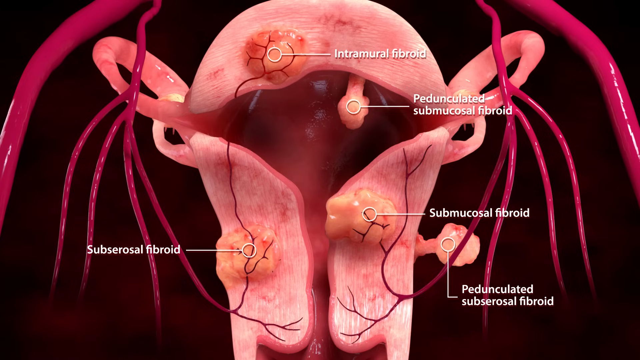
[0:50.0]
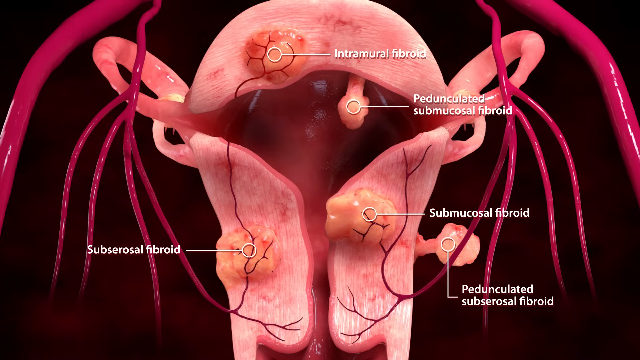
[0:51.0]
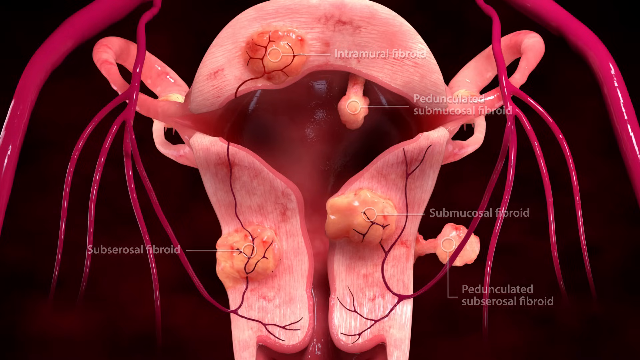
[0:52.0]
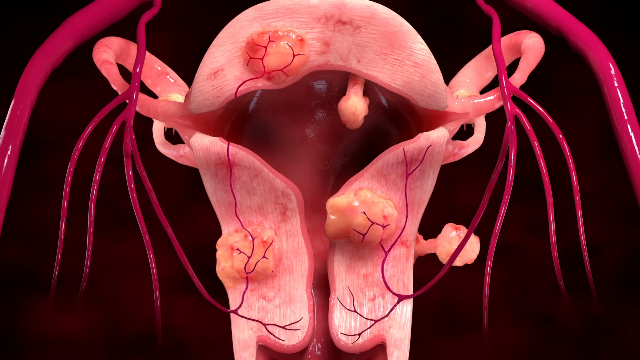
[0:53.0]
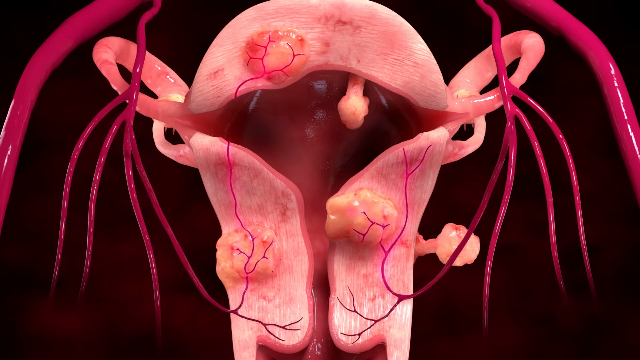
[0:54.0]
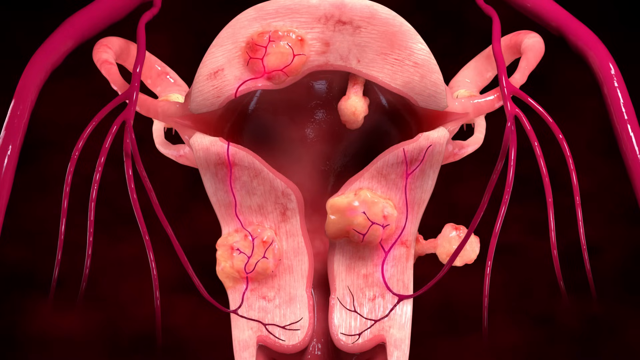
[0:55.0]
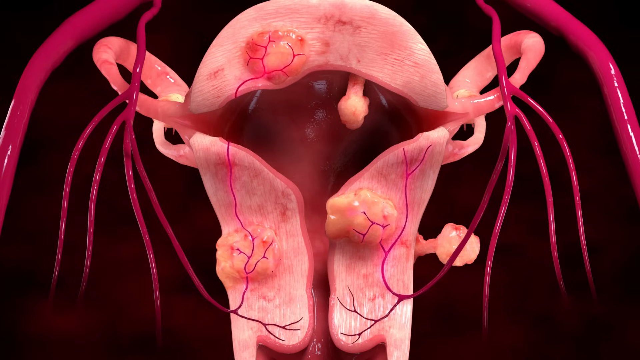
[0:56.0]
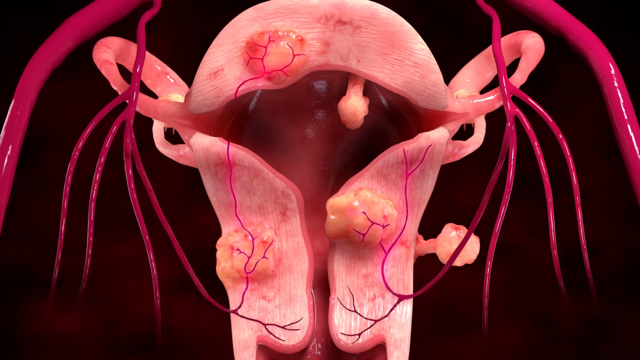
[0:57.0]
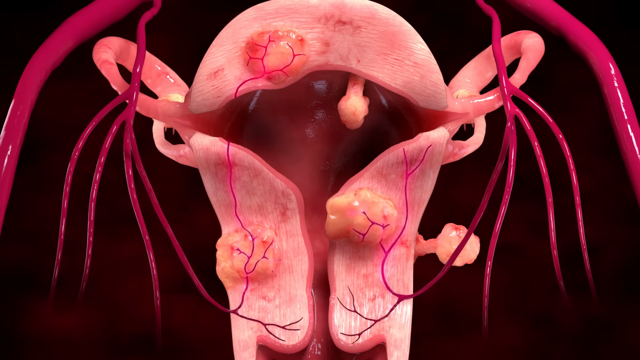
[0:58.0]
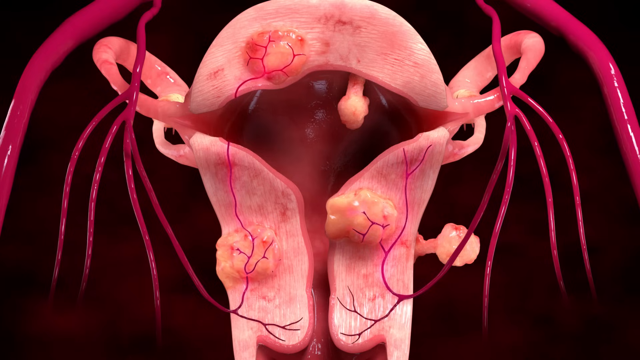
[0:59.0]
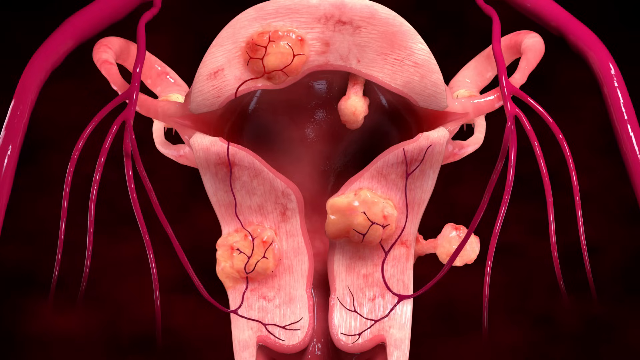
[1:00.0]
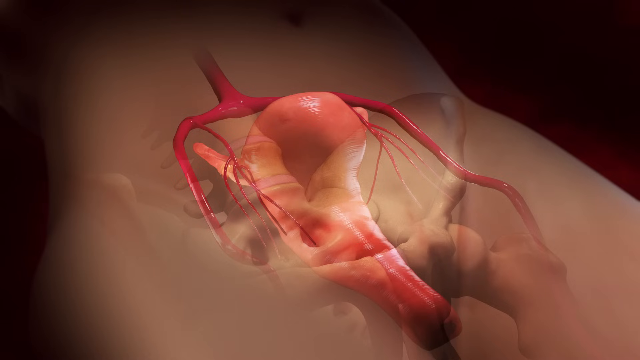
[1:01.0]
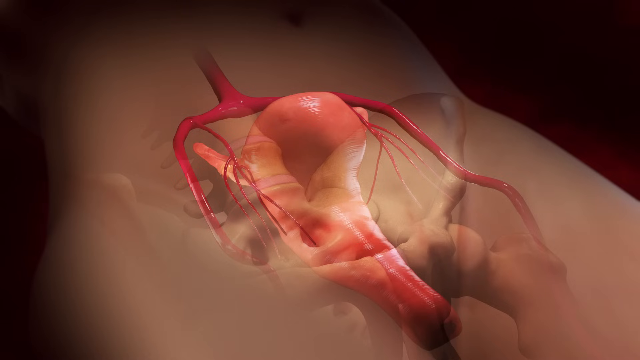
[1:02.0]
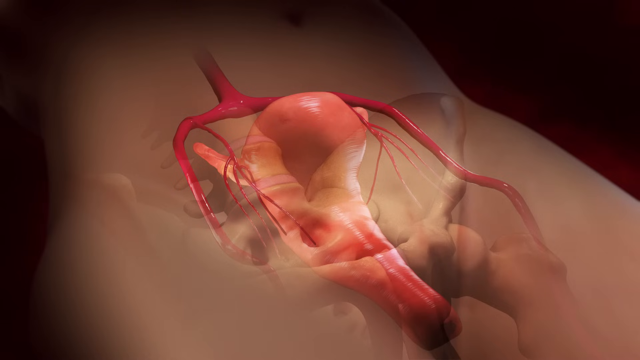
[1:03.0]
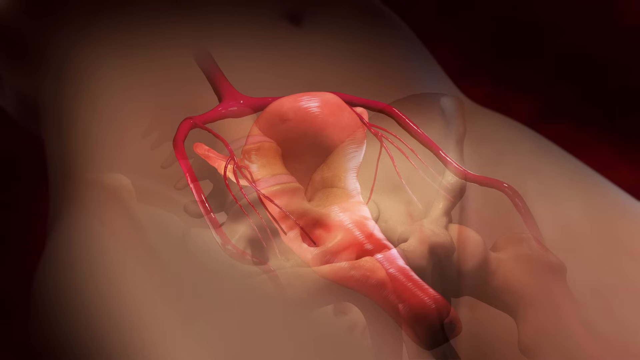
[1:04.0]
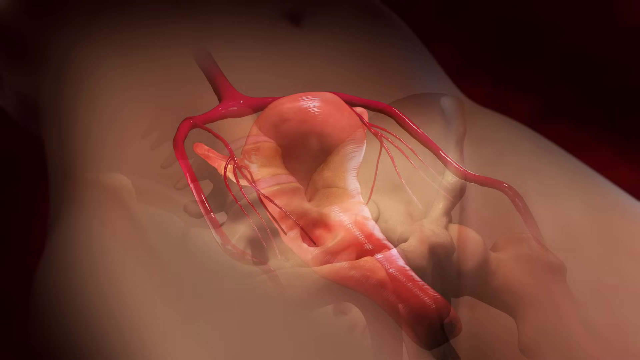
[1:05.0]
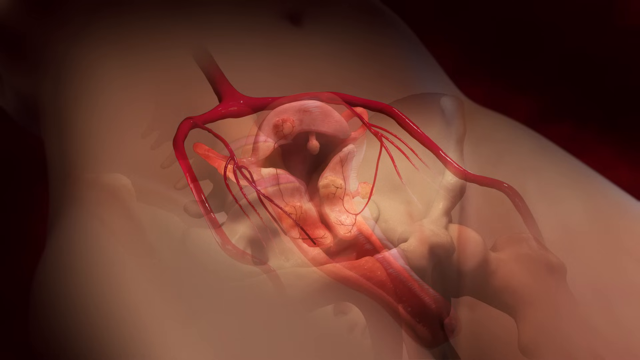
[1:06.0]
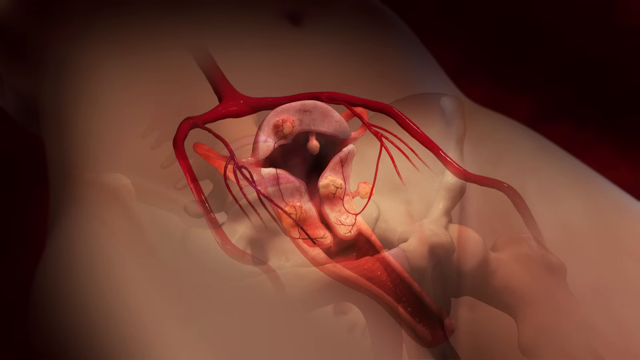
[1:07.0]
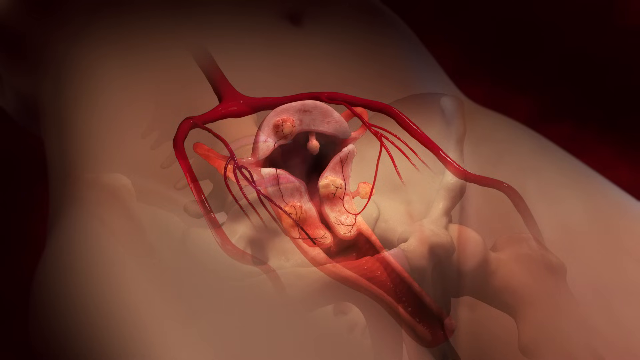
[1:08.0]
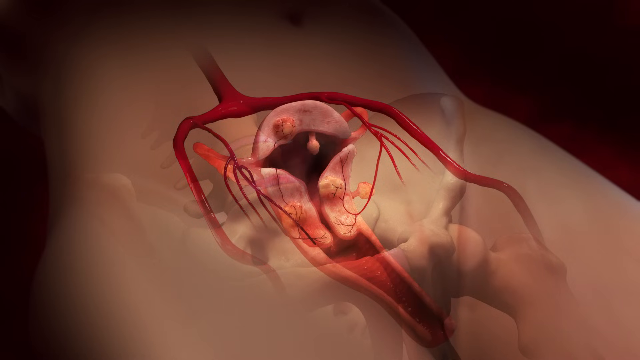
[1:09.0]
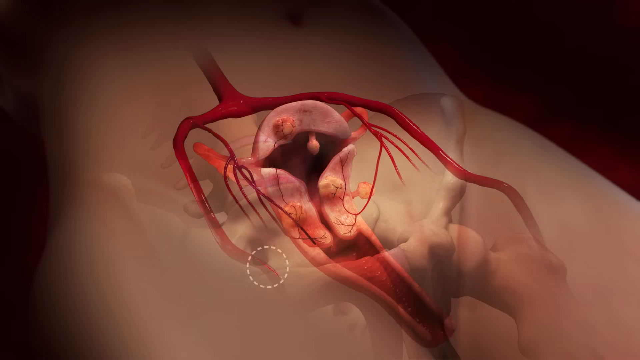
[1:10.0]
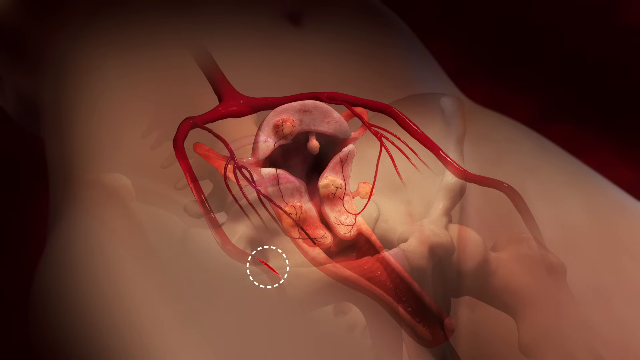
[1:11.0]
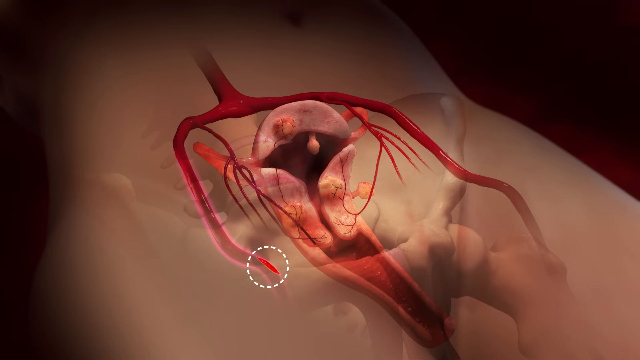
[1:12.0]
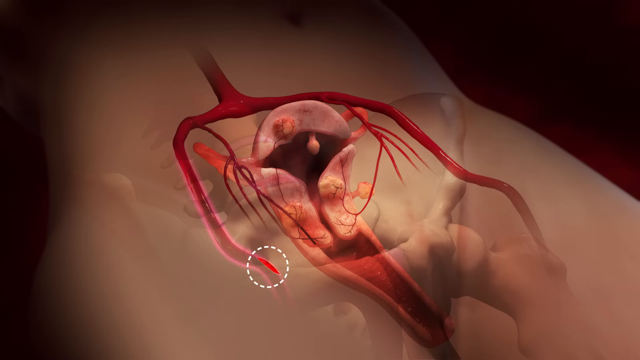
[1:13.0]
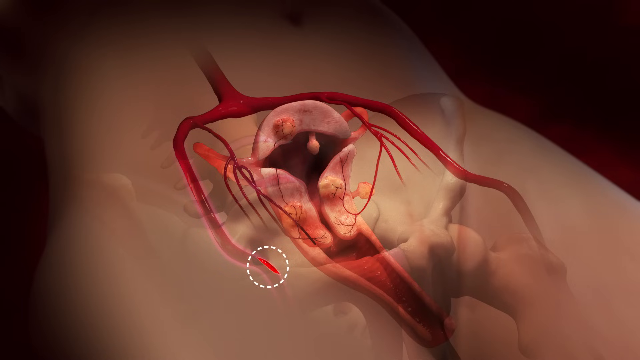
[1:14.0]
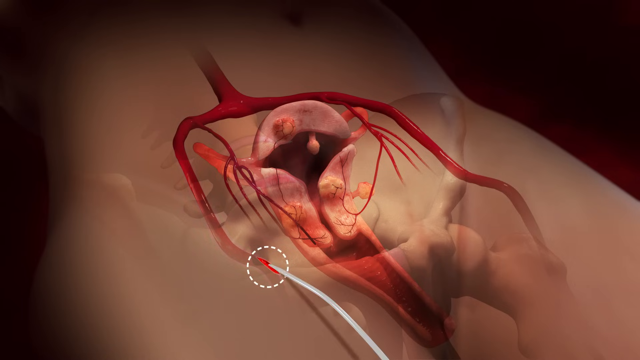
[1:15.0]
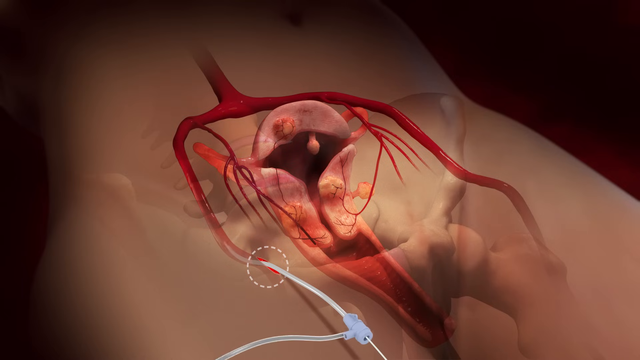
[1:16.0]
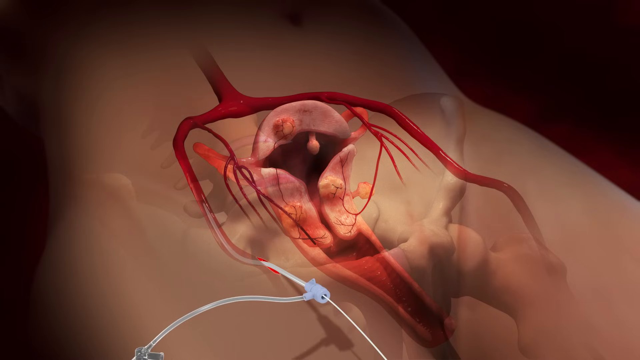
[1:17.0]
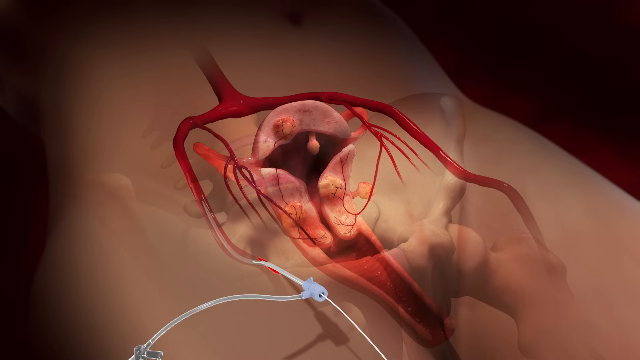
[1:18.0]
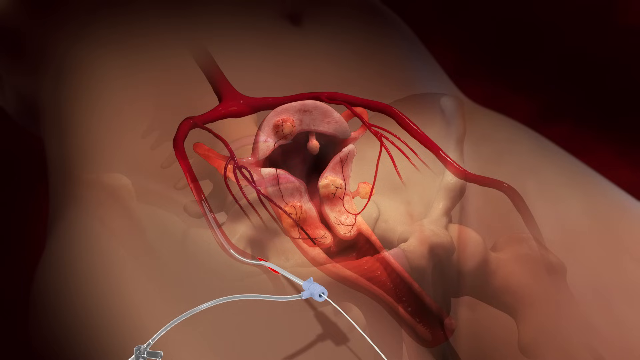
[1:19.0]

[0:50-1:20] A cross-section of the uterus shows different kinds of uterine fibroids, each labeled. One, sort of growing into the uterus lining and popping out a little, is labeled "intramural fibroid". One hanging down inside the uterus, looking like a small Brussels sprout, is labeled "pedunculated submucosal fibroid". One popping out three-dimensionally from the outside of the uterus is labeled "submucosal fibroid". One popping out like broccoli on the outer side of the uterus into the body cavity is labeled "pedunculated subserosal fibroid". Another, labeled "subserosal fibroid", does not pop out but is embedded almost like a tumor in the outside of the uterine wall. The uterus is a kind of CGI version, and the major veins and blood vessels are visible.